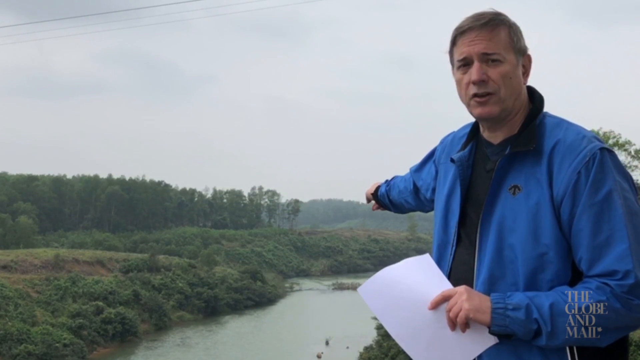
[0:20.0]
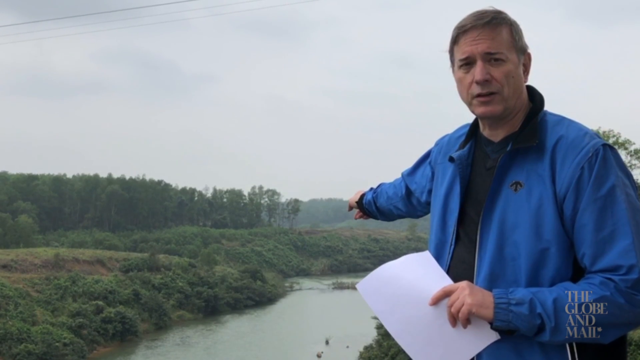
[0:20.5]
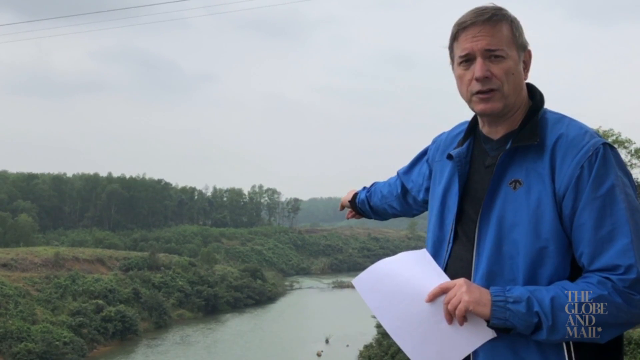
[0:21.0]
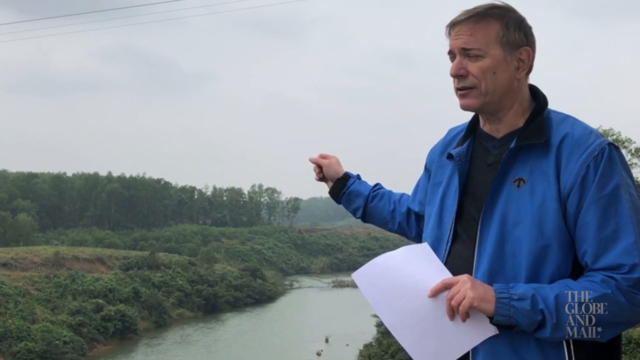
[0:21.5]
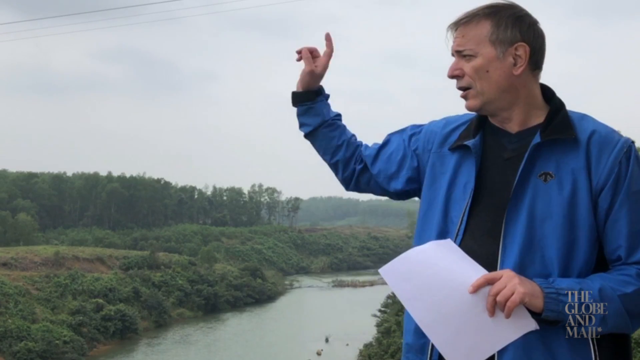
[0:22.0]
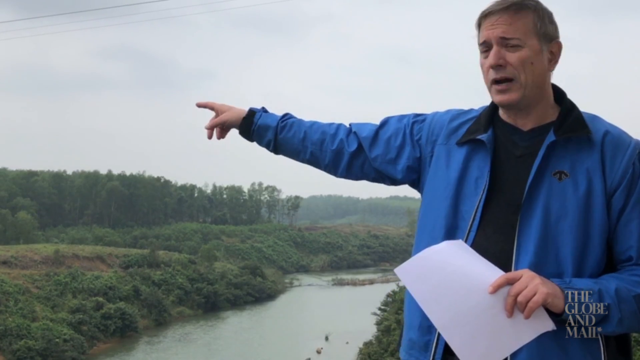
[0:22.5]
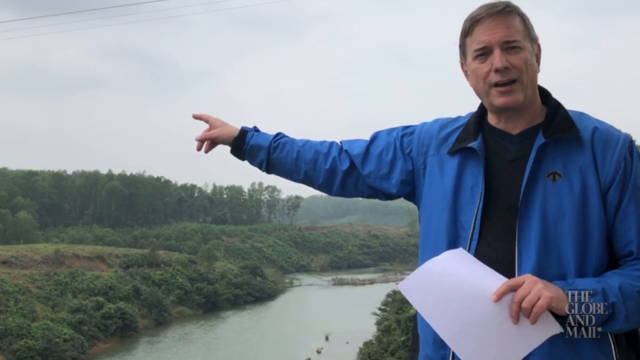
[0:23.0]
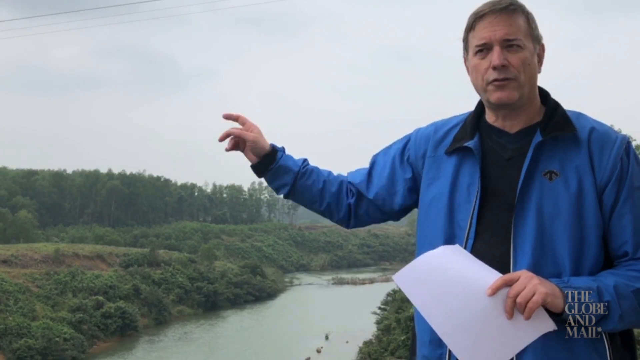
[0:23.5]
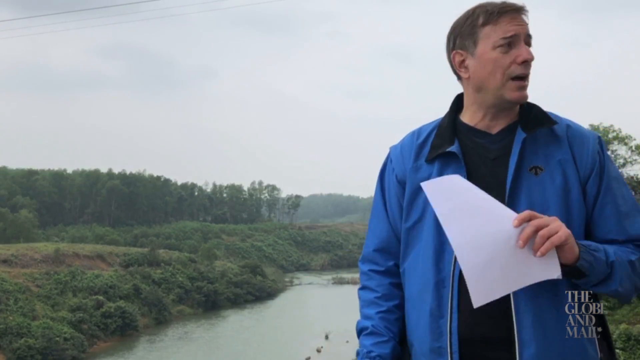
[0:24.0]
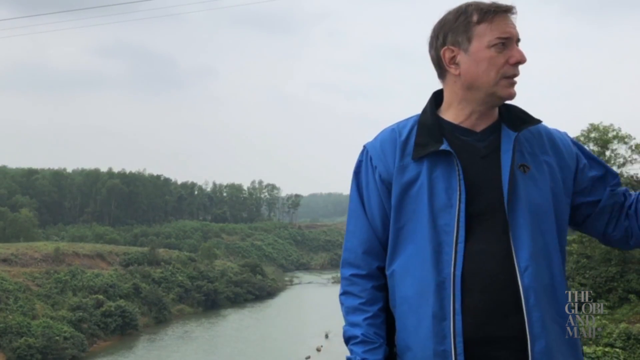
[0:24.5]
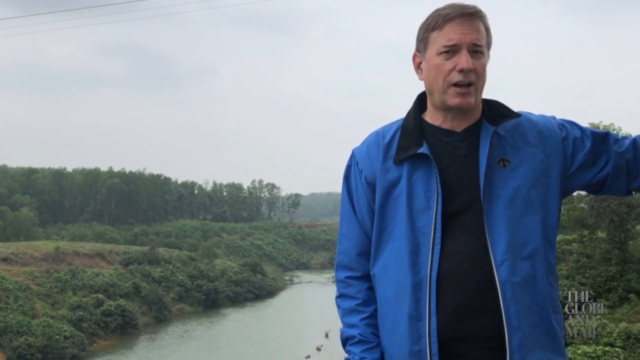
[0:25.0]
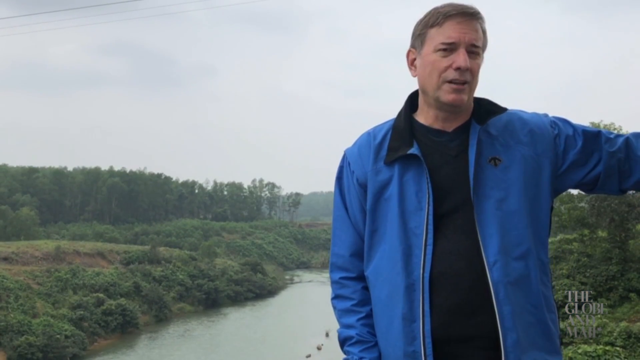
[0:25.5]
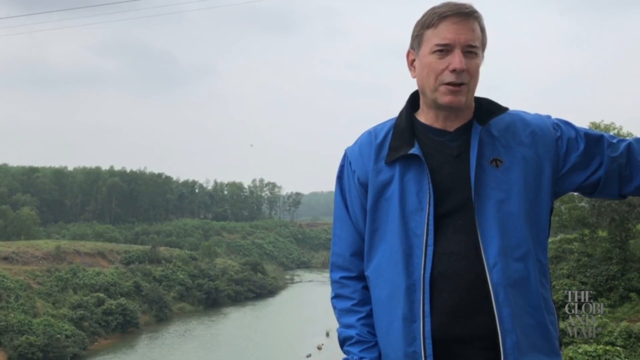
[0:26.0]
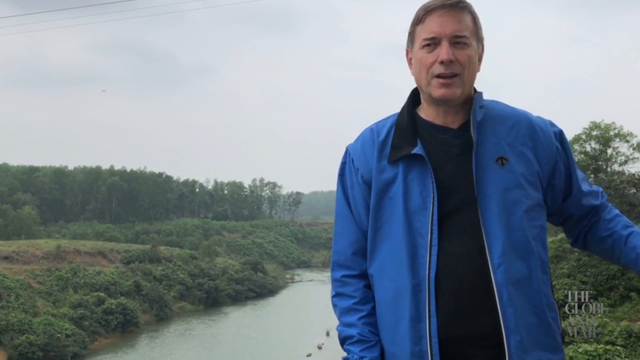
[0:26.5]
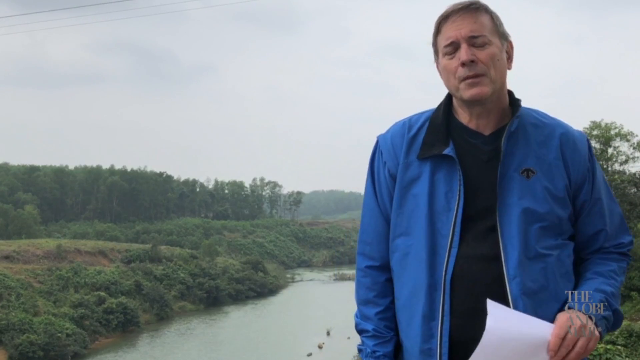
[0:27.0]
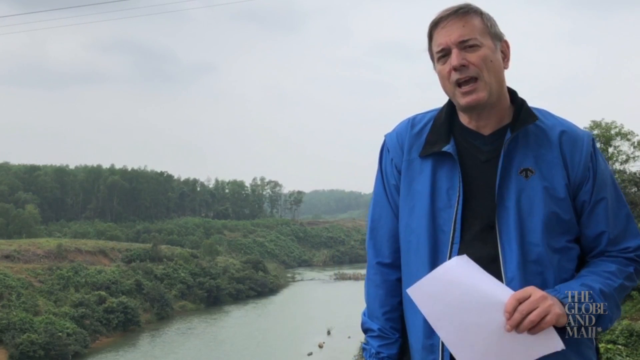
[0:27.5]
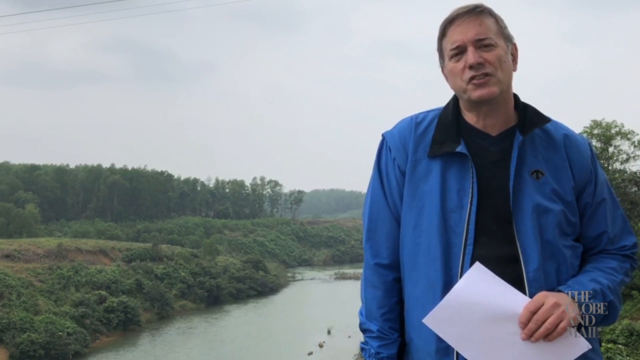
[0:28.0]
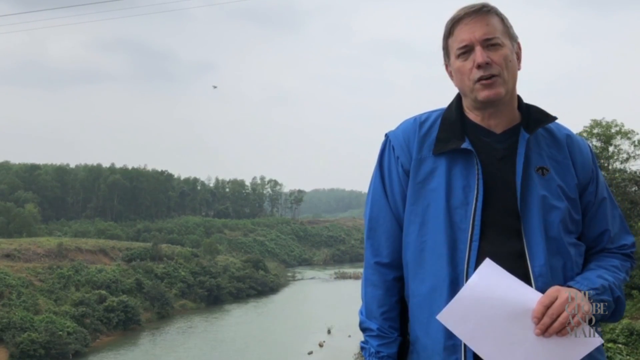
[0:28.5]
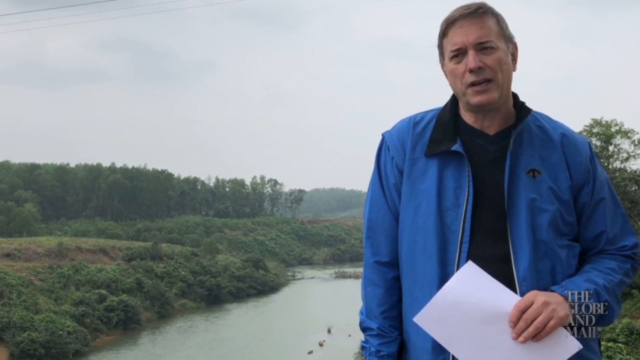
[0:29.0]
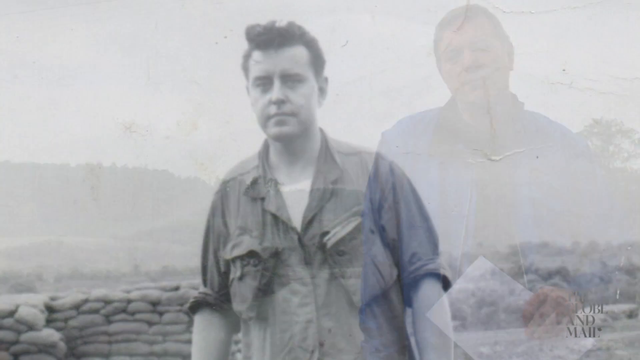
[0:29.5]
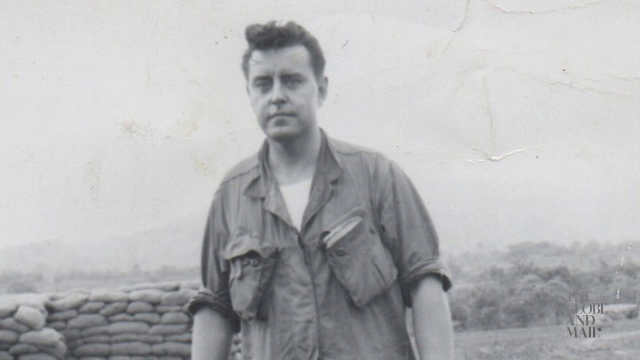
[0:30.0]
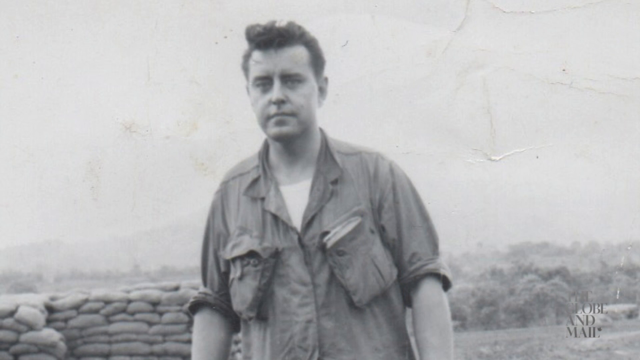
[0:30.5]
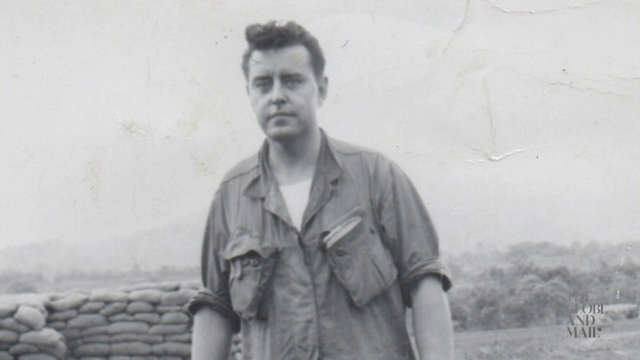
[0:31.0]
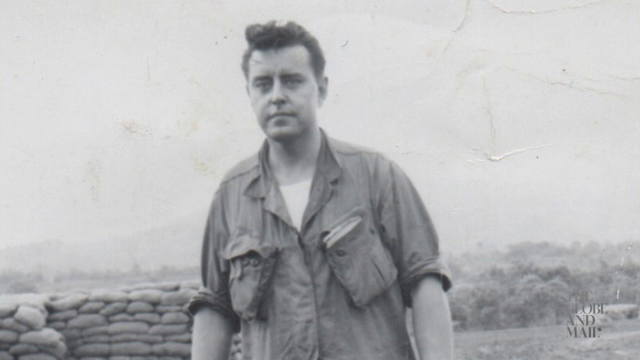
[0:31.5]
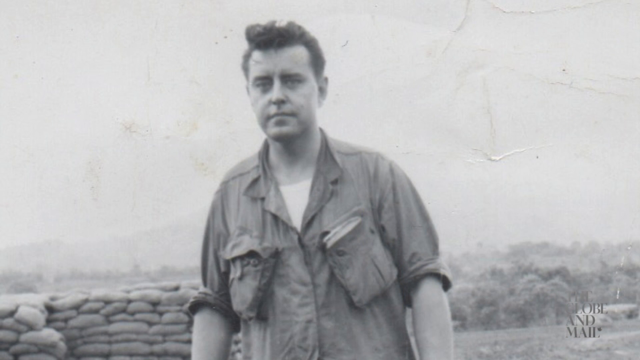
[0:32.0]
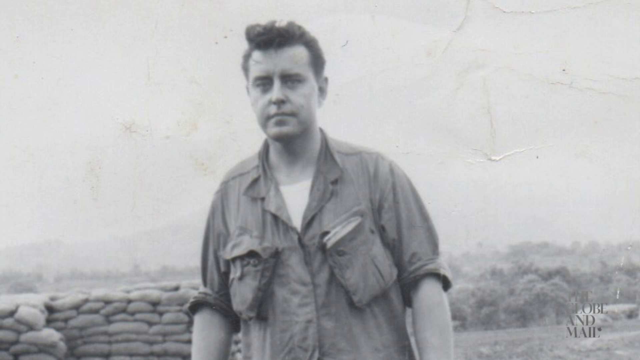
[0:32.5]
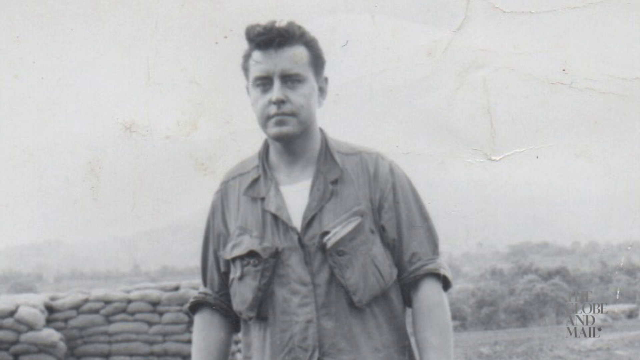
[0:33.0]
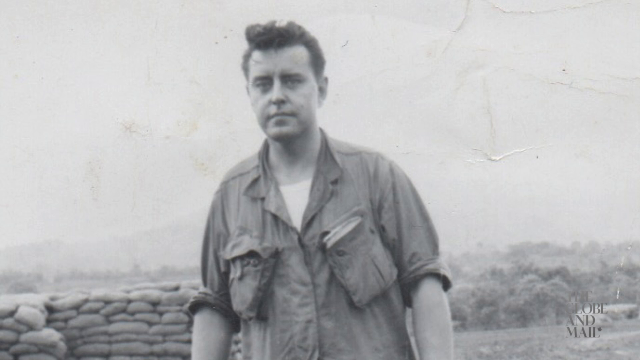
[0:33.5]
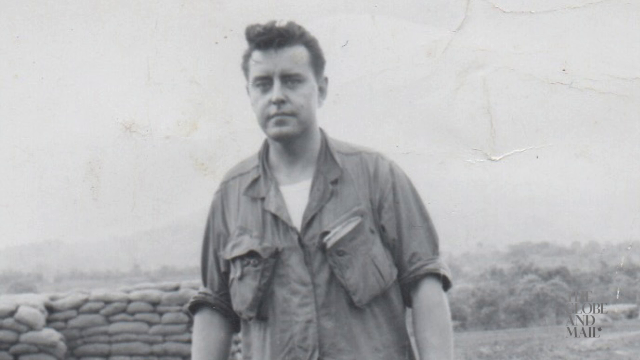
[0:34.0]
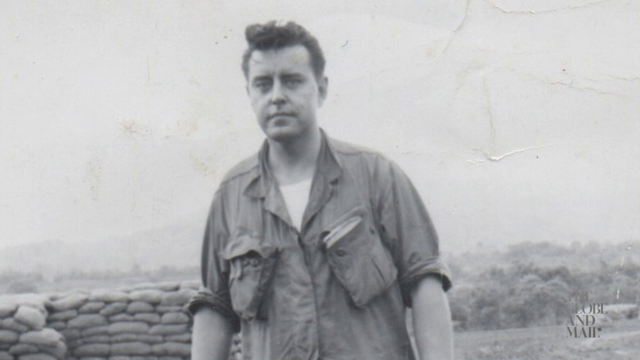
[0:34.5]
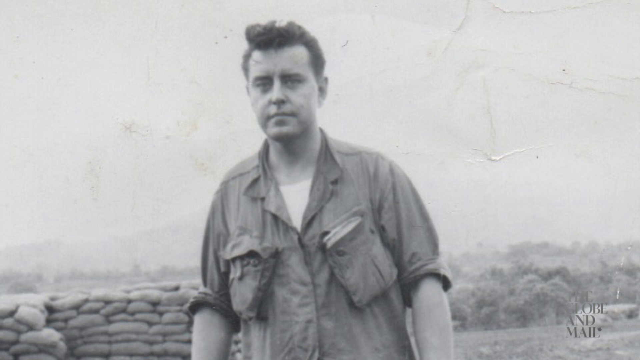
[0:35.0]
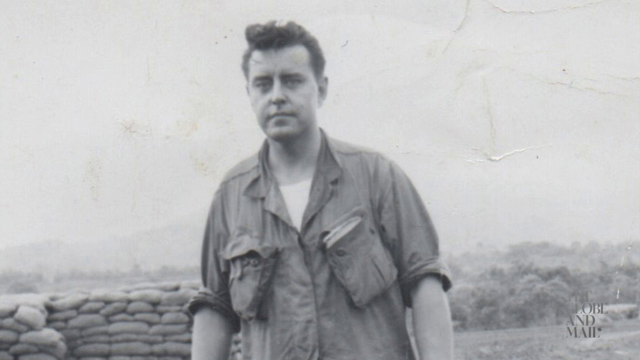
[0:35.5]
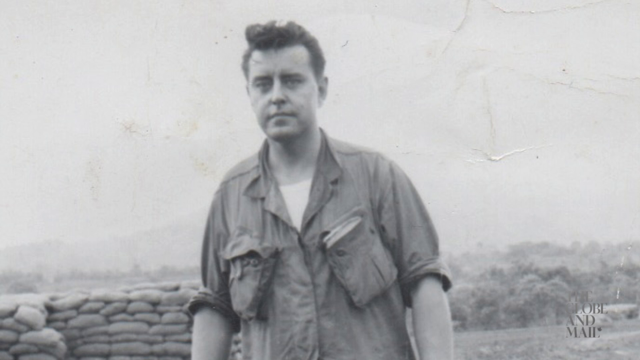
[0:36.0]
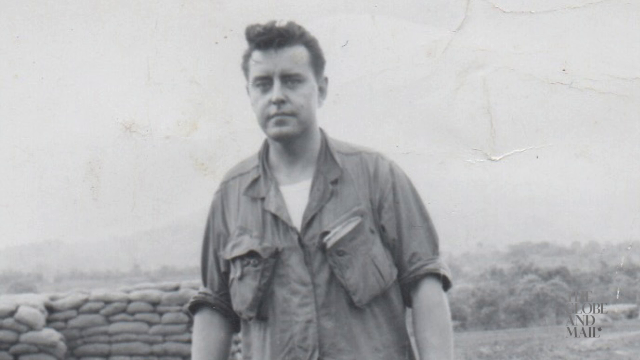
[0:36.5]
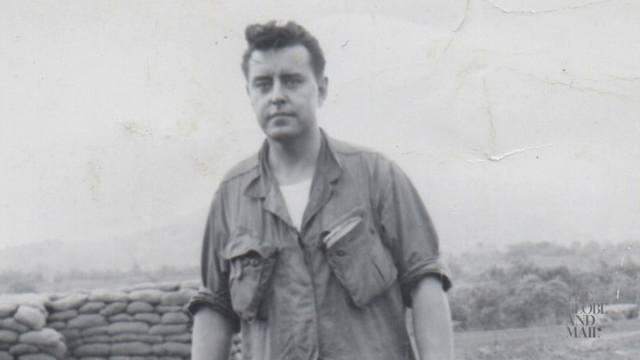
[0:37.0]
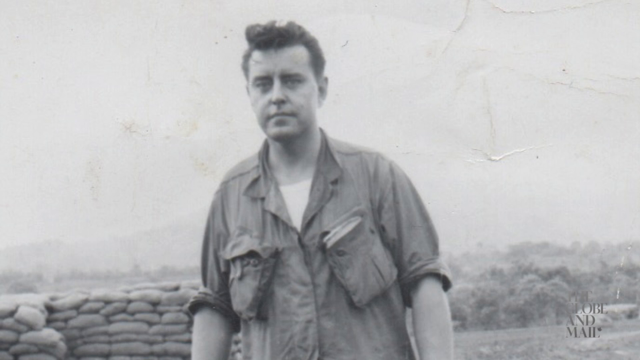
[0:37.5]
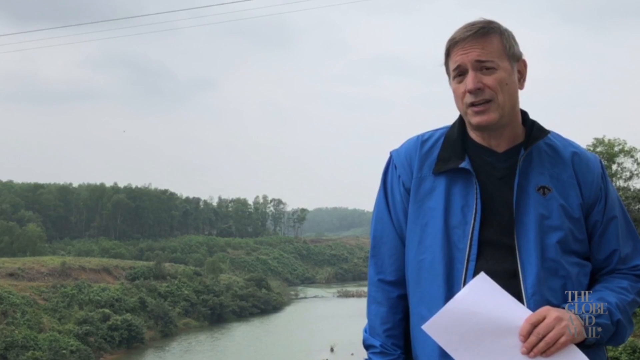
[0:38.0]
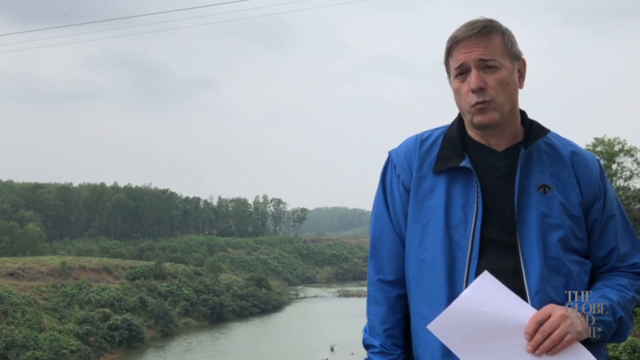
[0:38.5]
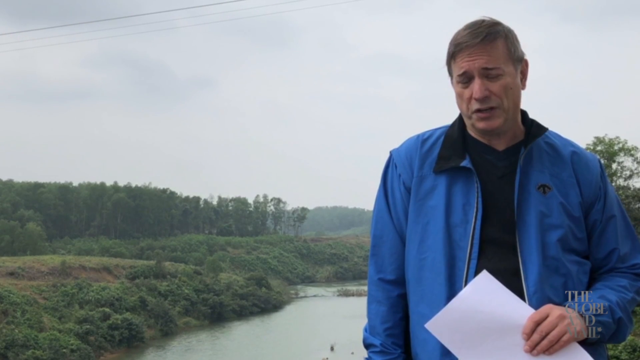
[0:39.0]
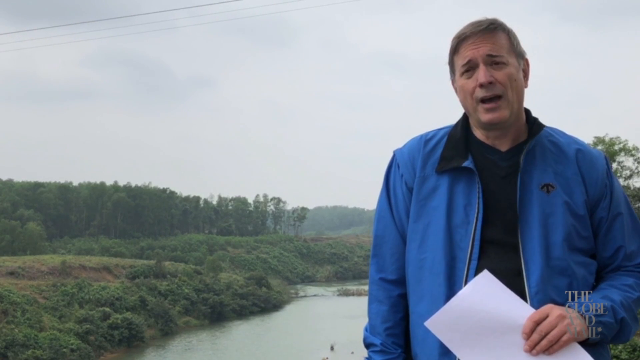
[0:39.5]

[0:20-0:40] The man moves his right arm from pointing down the river behind him to point towards his right in the distance. He brings the arm back down to his side, turns slightly and points to his left in the distance, continuing to talk to camera. He then stands with both arms down, the papers just visible in his left hand. The black-and-white photograph returns, now zoomed in so that only the top half of the man is visible, roughly from his elbows upwards. He wears a white vest with combat fatigues over it.